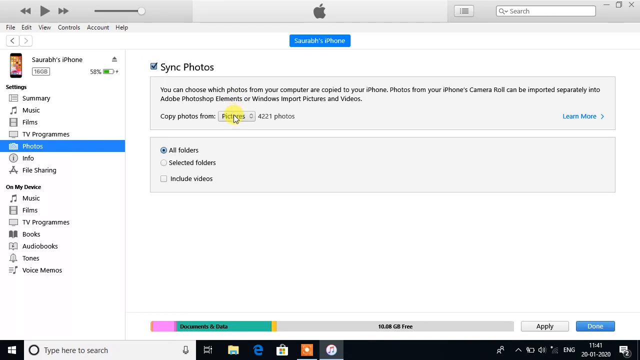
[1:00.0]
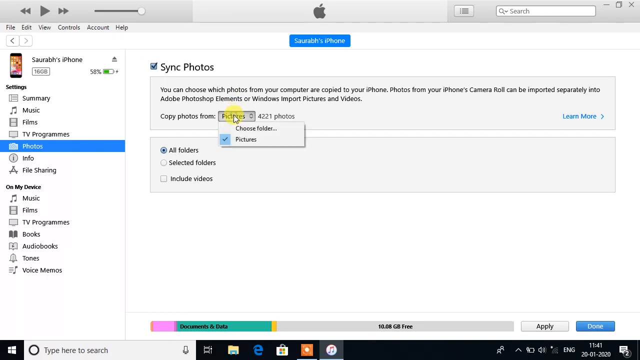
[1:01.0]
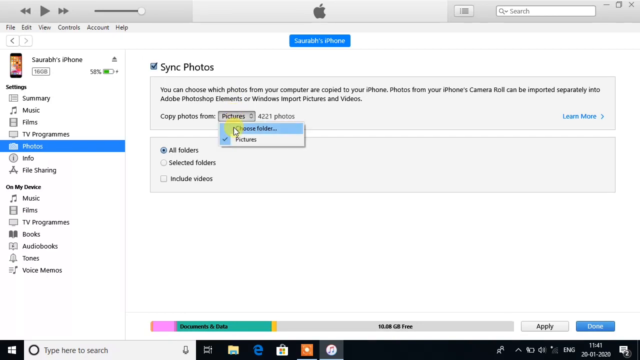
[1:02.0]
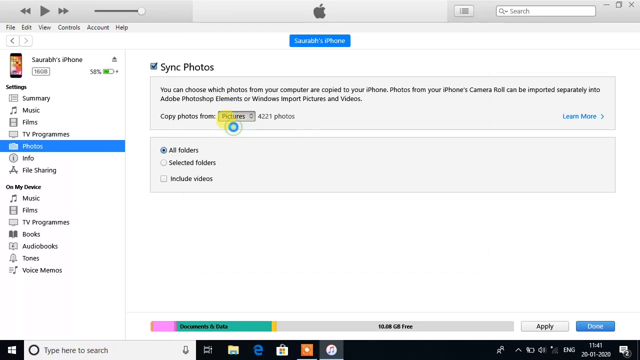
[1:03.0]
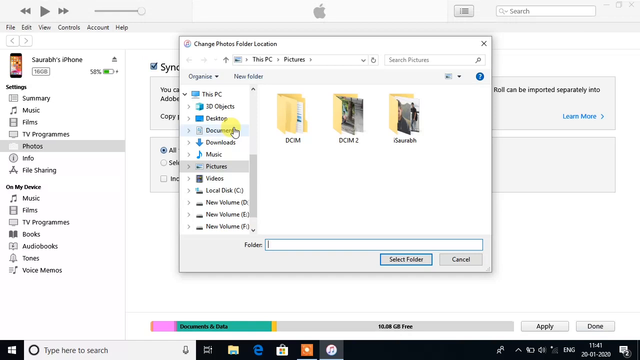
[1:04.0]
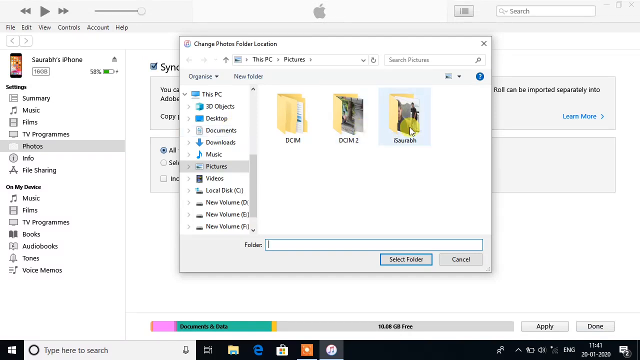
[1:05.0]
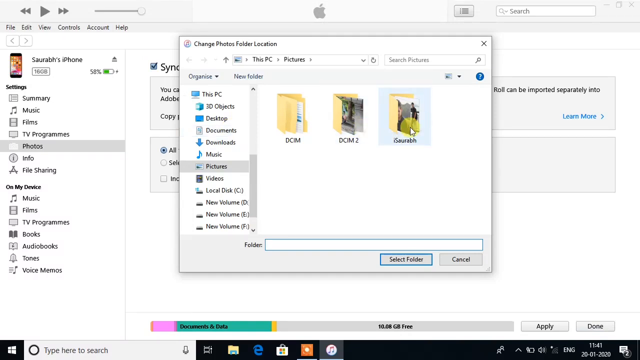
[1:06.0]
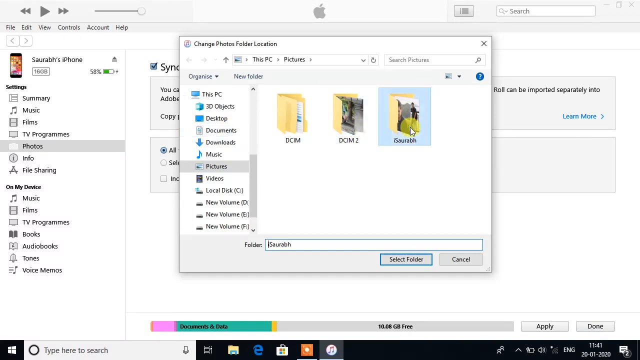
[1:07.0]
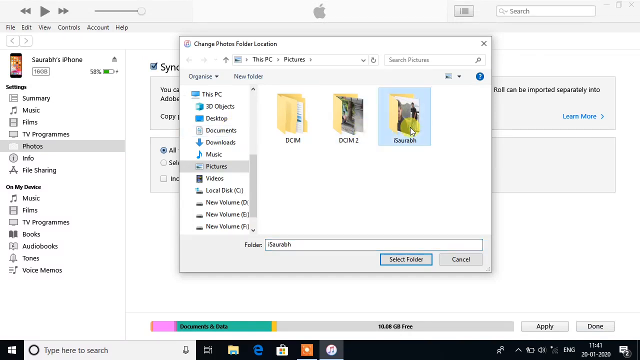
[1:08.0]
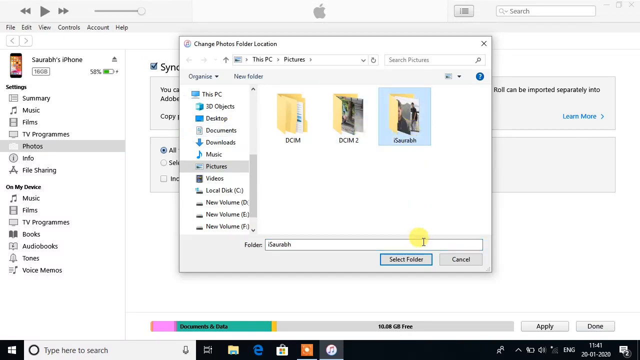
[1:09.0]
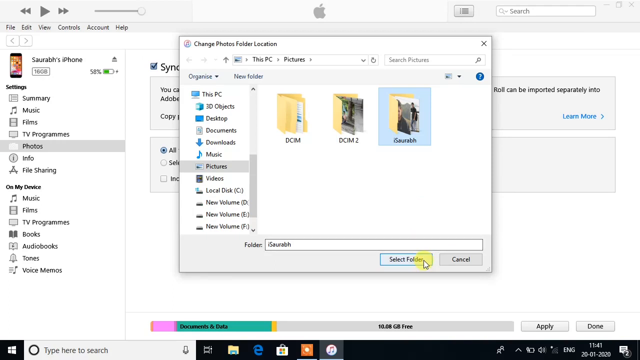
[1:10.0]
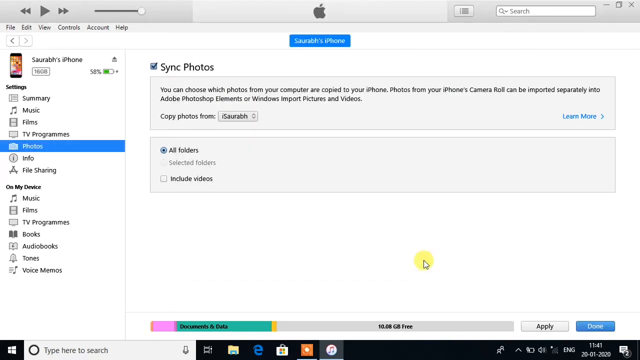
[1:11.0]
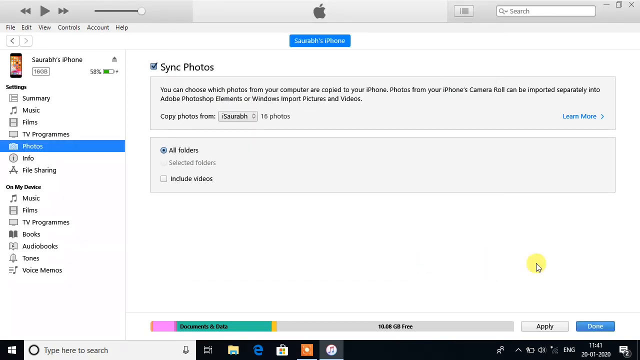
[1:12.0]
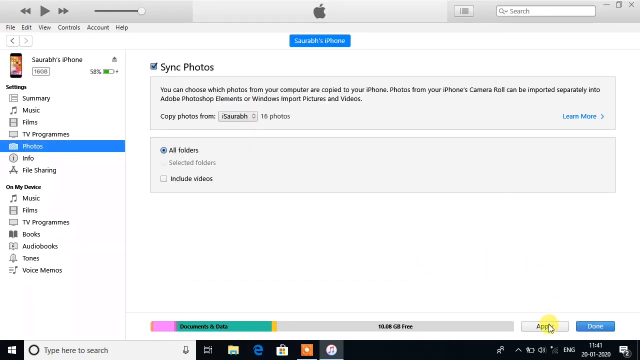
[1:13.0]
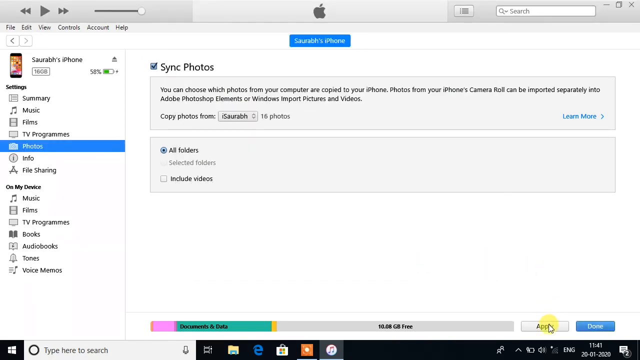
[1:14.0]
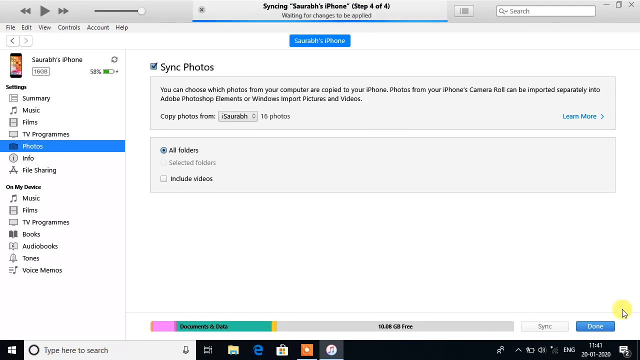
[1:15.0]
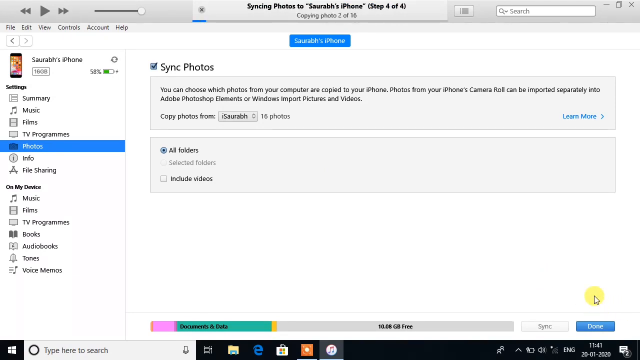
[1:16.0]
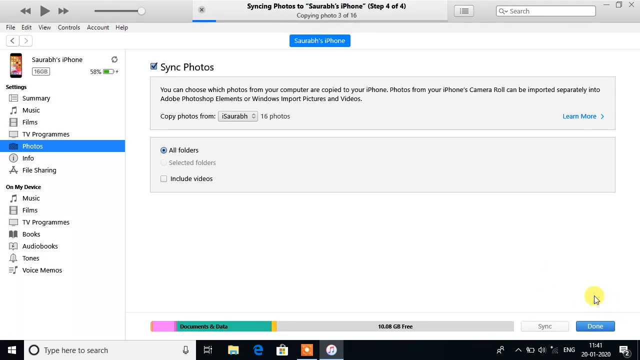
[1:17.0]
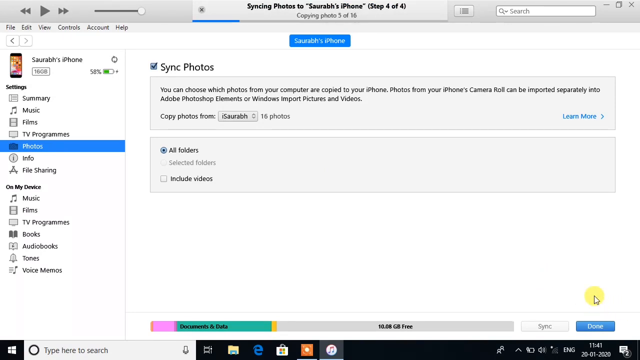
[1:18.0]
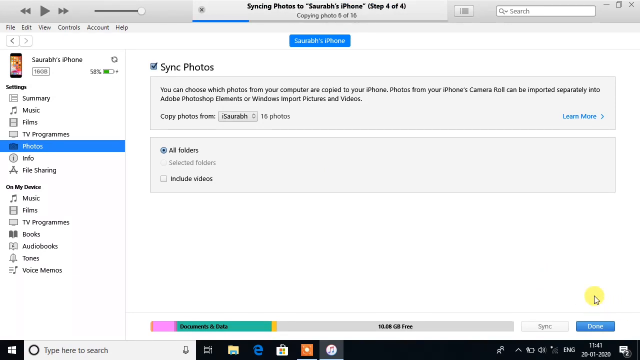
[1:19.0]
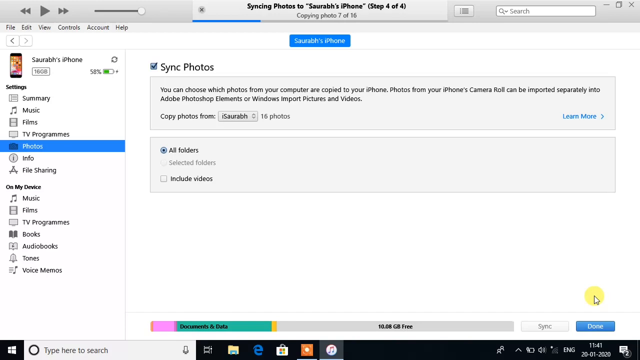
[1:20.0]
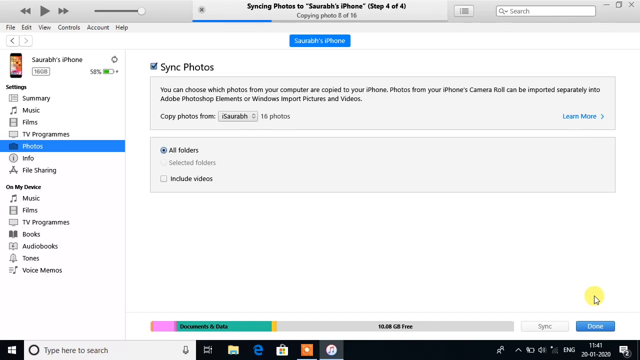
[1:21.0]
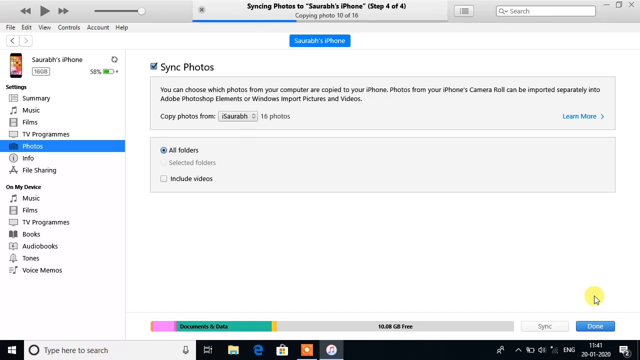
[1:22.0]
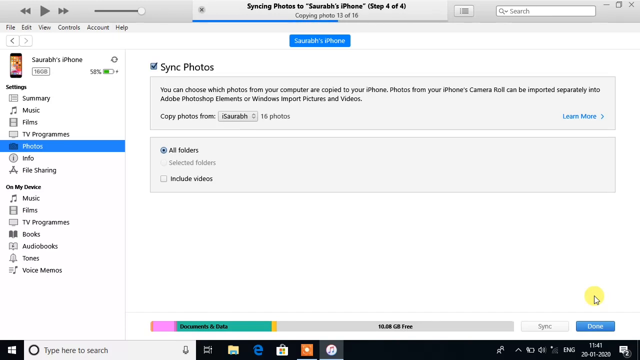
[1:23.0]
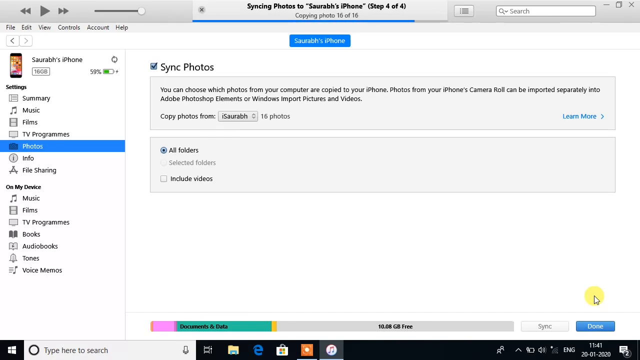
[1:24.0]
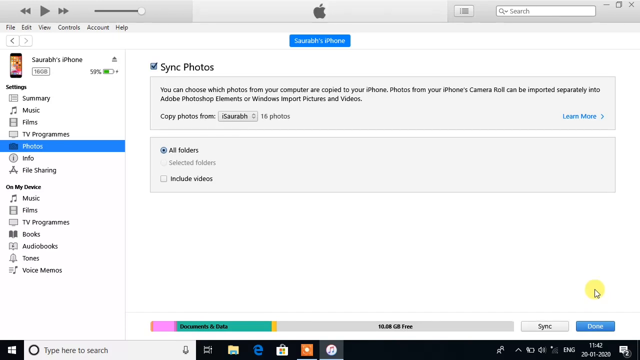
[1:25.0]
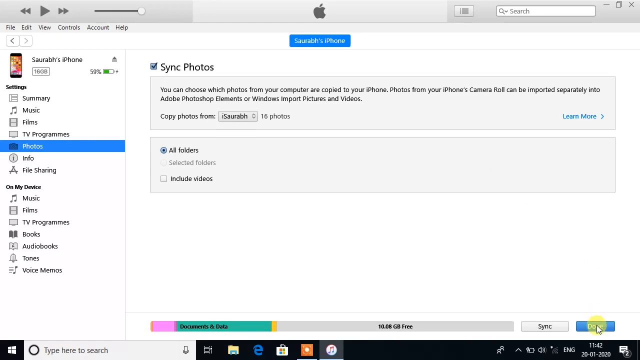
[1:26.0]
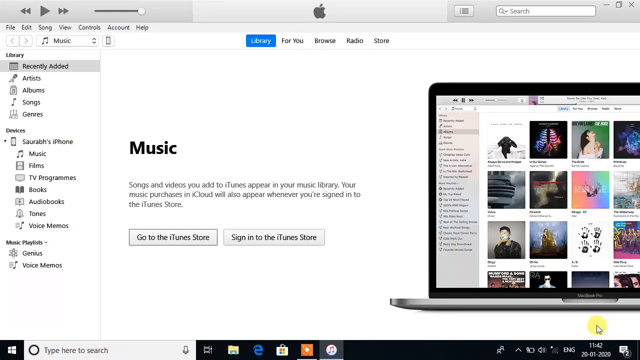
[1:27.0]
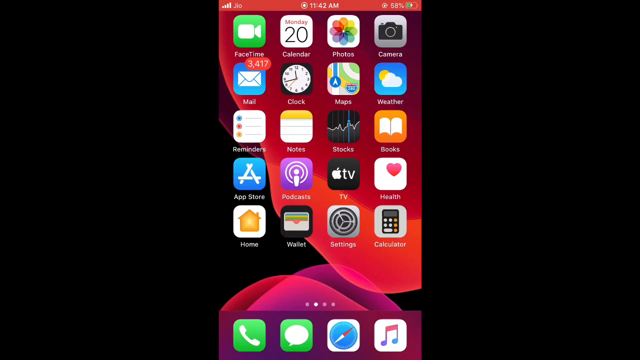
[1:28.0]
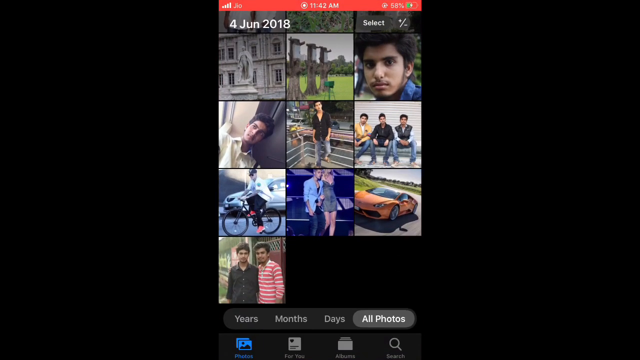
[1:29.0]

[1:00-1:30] With pictures highlighted, clicking on that opens the pictures menu on the computer, showing the file folder the user just created and moved the photos into. They select that folder and click "select folder" at the bottom. A message says it is syncing photos to the phone, which takes a moment, and the screen briefly returns to the music screen. Then a pop-up of what looks like the person's cell phone screen appears, showing the photos that were just synced from the folder; they look like the same photos, suggesting the photos are apparently being moved from the computer to the phone.